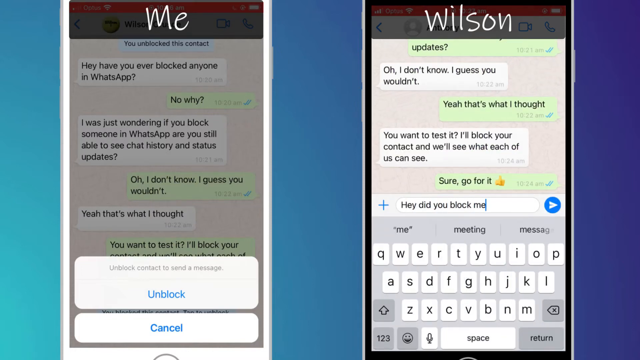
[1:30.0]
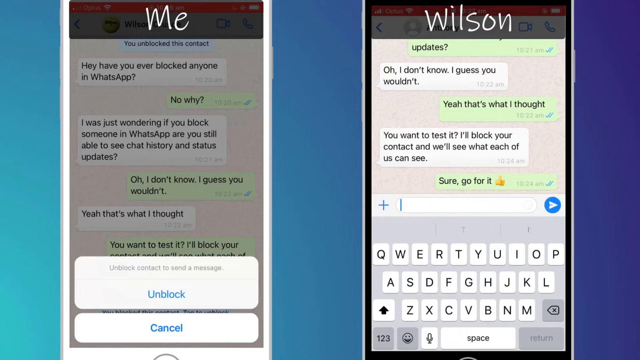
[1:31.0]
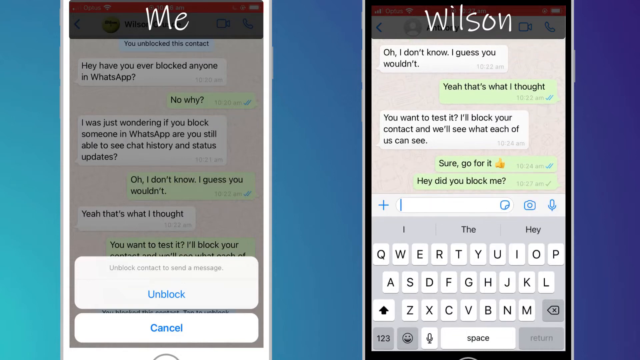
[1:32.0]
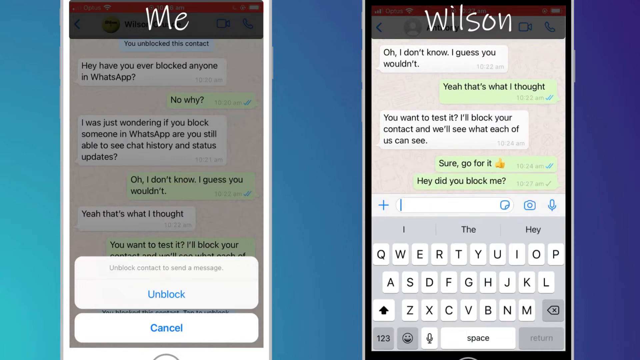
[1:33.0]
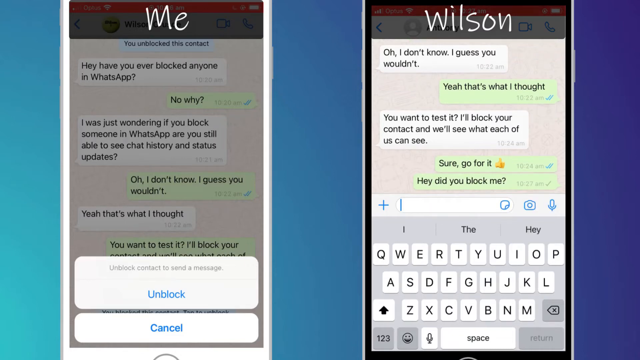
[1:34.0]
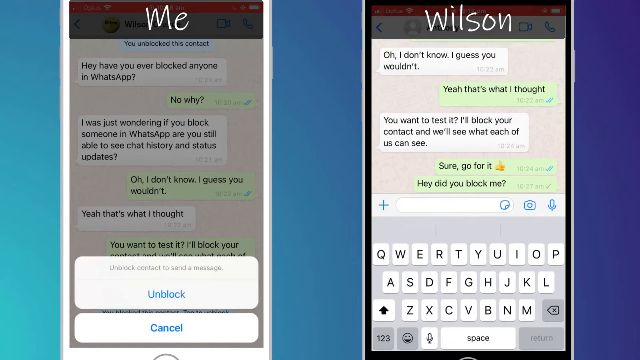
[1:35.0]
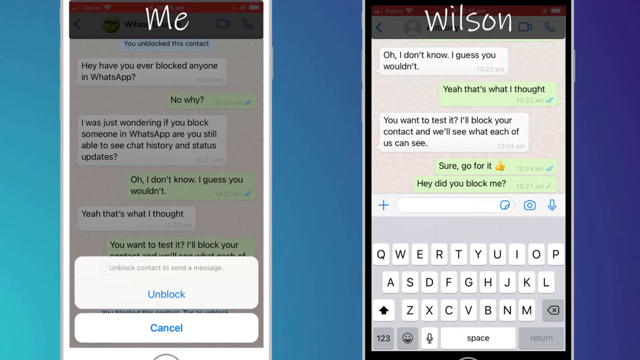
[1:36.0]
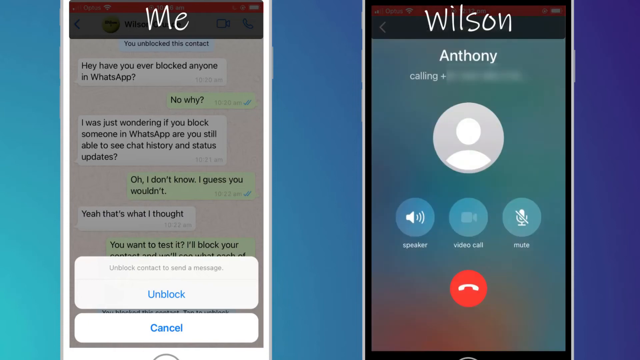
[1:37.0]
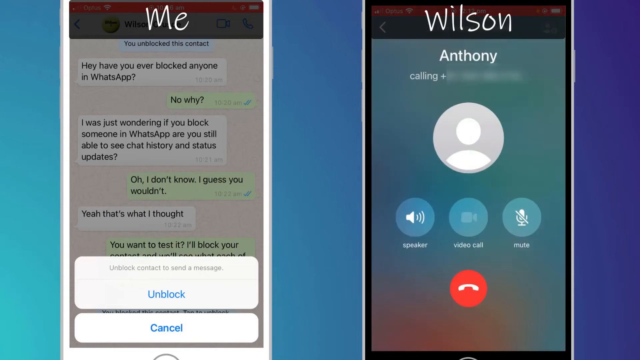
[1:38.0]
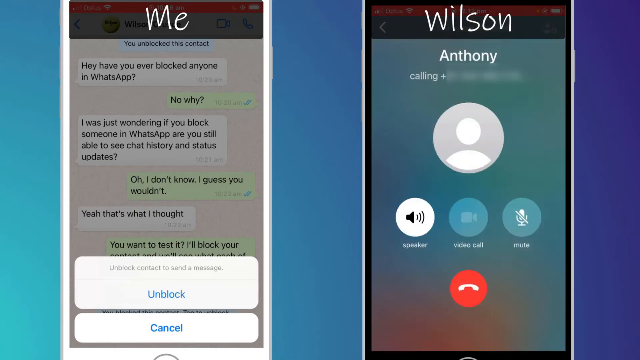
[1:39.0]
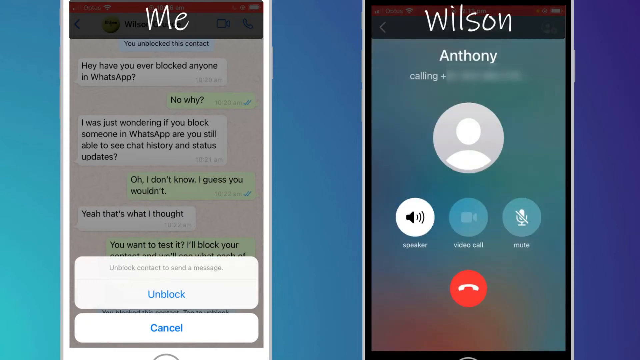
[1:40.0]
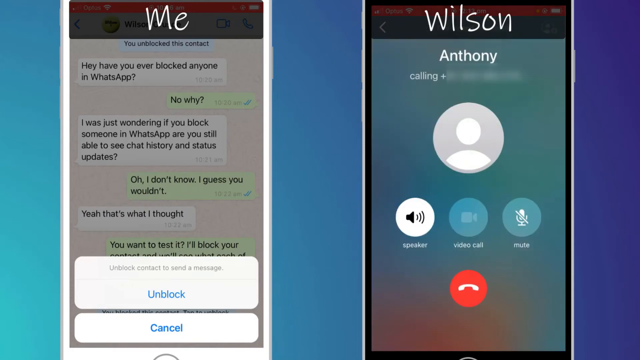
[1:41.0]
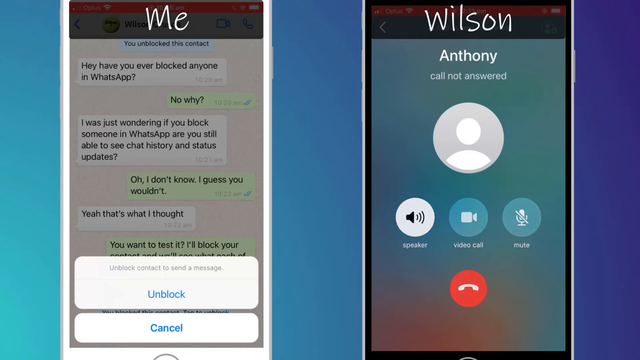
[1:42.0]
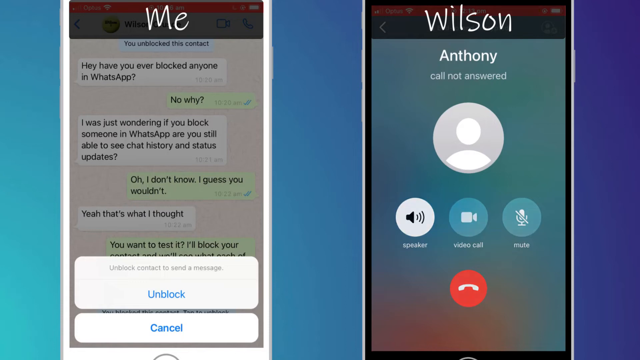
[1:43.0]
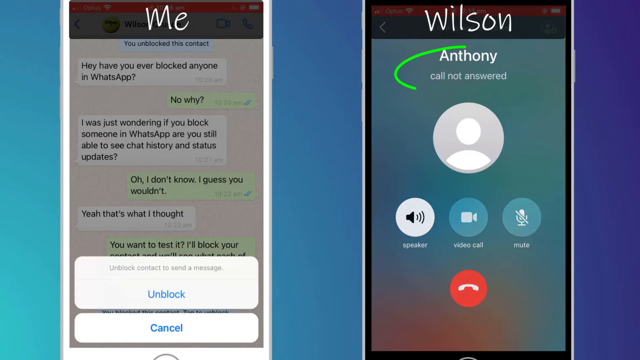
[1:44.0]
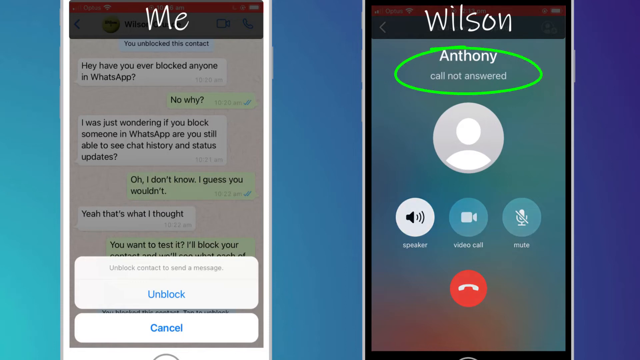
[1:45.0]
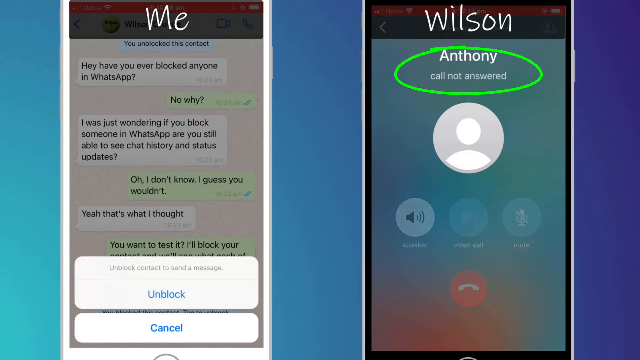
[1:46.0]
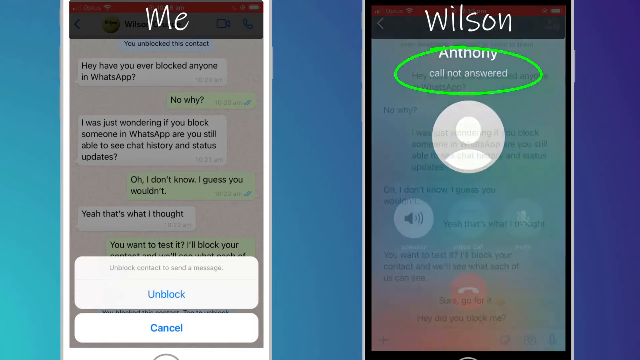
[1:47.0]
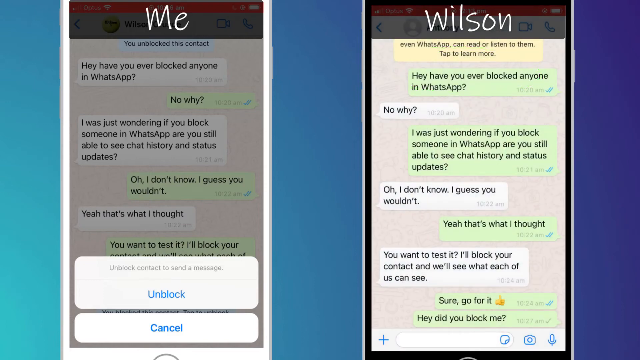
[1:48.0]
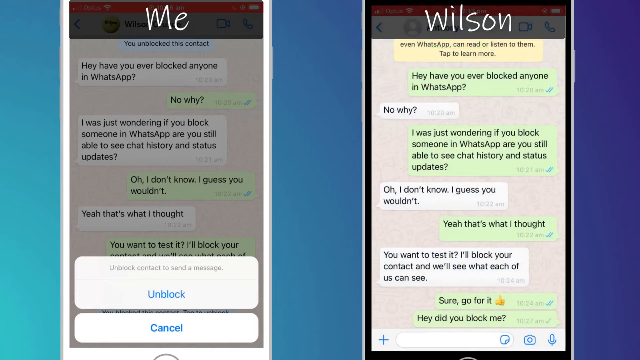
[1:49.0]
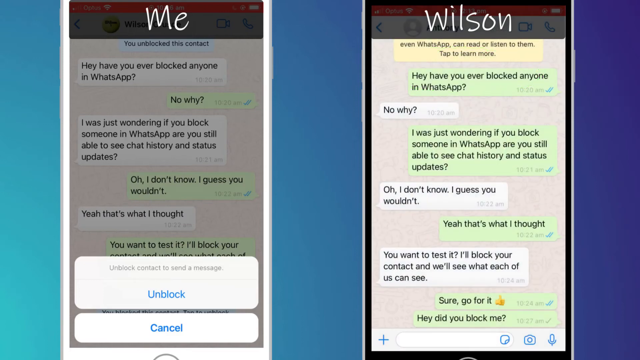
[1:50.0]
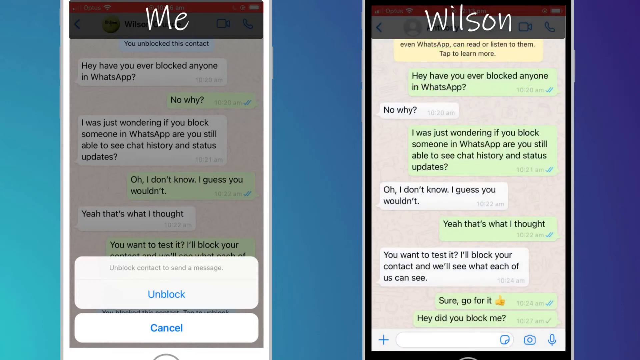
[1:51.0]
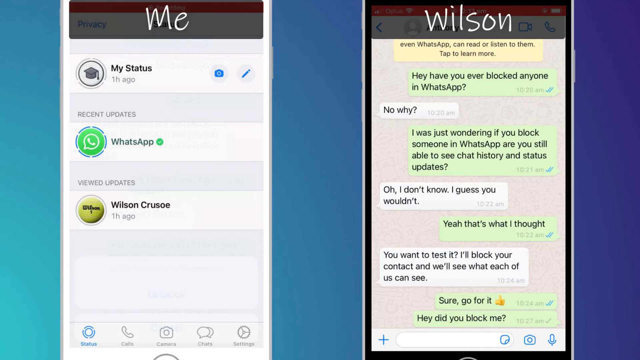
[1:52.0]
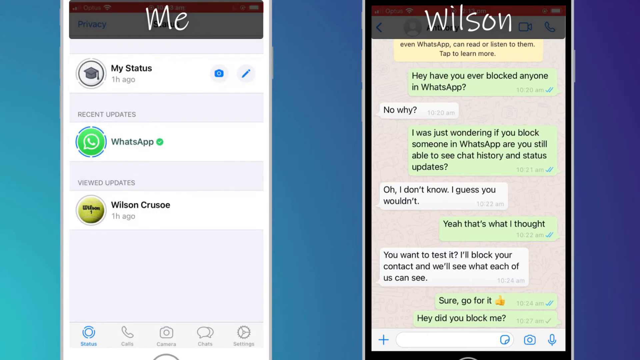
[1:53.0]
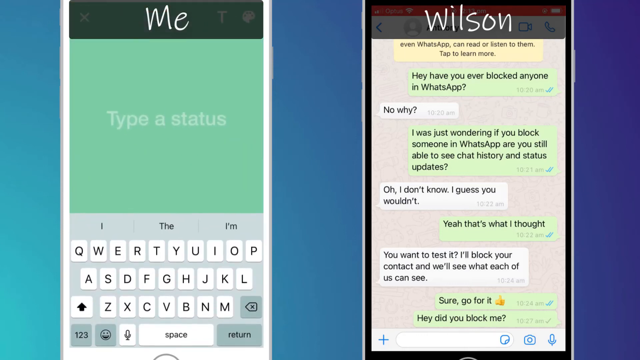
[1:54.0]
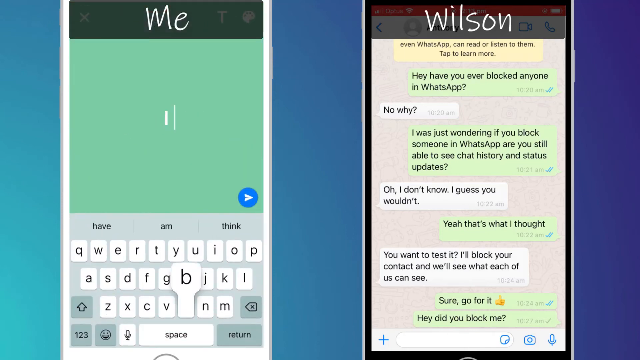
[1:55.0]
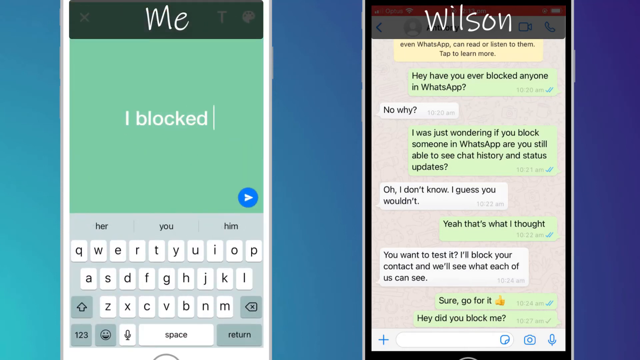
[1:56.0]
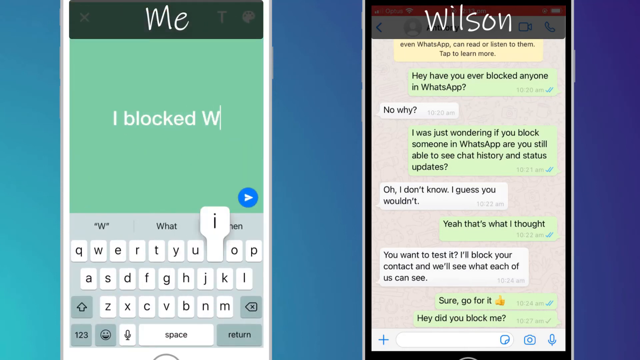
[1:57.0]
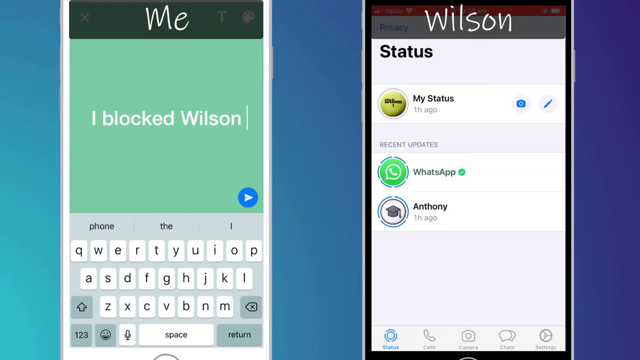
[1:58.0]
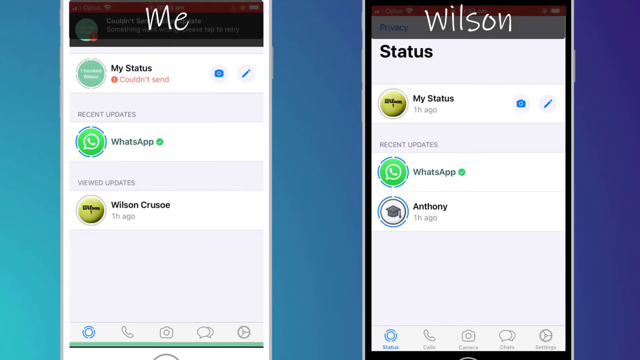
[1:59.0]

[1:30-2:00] Two phone screens are on a background that is light blue on the left, darker blue in the middle and purple on the right. Above the left phone it says "me", and above the right phone it says "Wilson". The phones show a conversation between the two people. At the bottom of the left phone are "unblocked contact" with "unblocked" in blue letters below it and "cancel" in blue letters below that. On the right phone, the person types "hey, did you block me?" and sends it. Then a call screen appears; it looks like Wilson is calling Anthony. It shows a small circle with a person emblem, speakerphone, video call and mute icons, and a red phone button at the bottom. The person clicks speakerphone and it lights up. The screen says "call not answered" under Anthony, and "call not answered" is circled in green. It returns to the conversation screen and the left phone, then to a screen showing WhatsApp and the contact Wilson Crusoe. The phone screen turns green and "I blocked Wilson" is typed into it. Then the view goes down and shows something else.